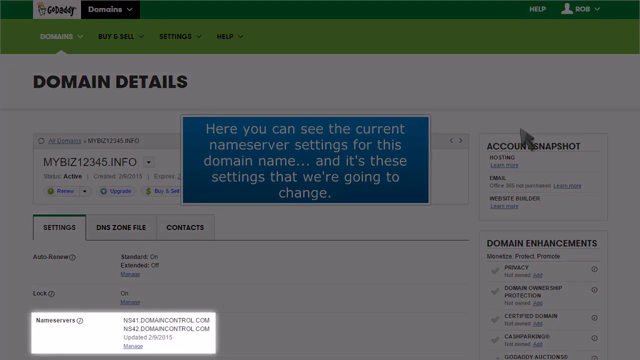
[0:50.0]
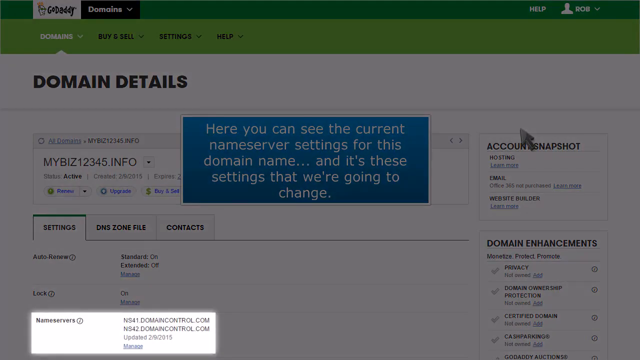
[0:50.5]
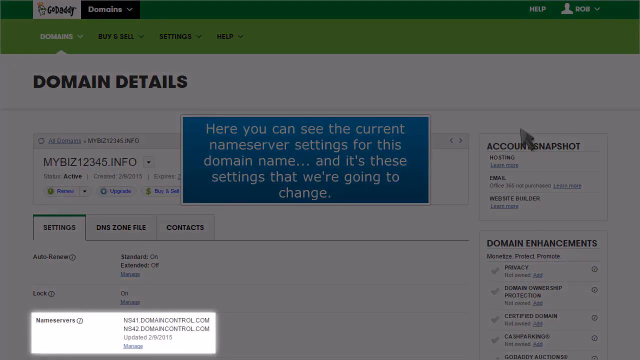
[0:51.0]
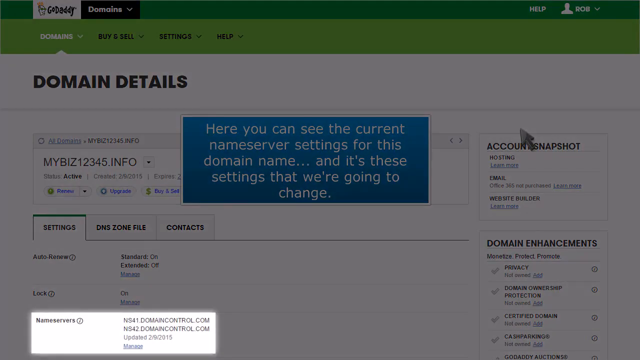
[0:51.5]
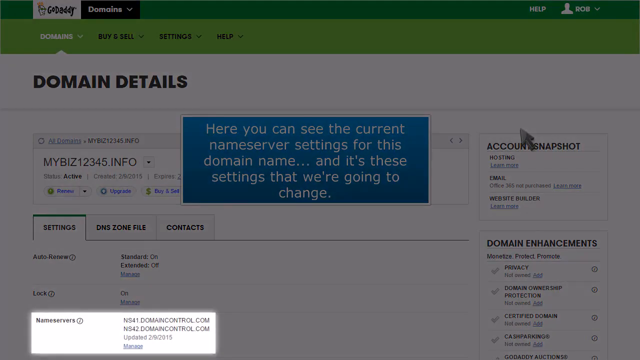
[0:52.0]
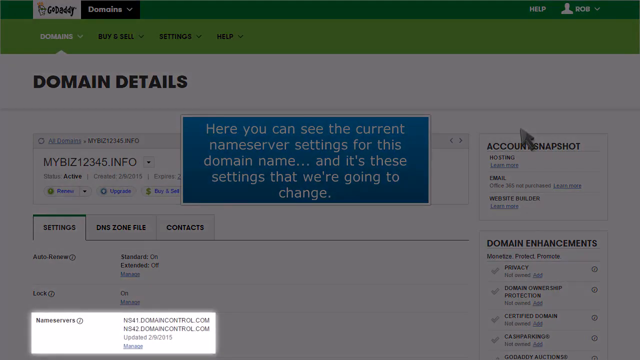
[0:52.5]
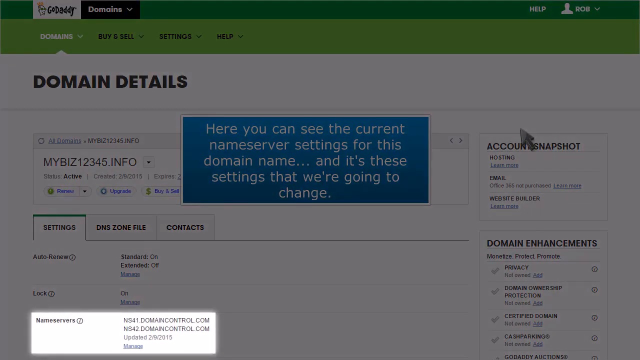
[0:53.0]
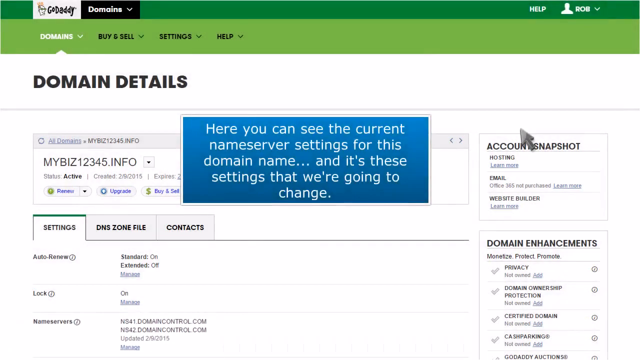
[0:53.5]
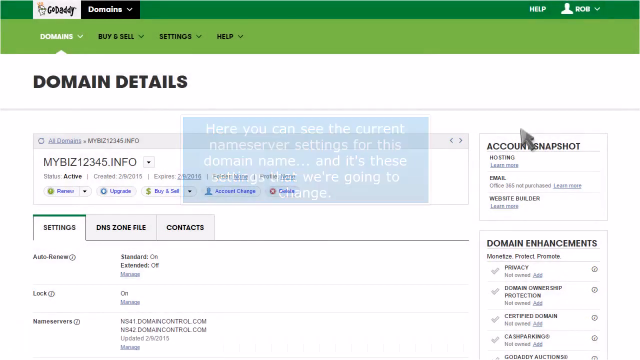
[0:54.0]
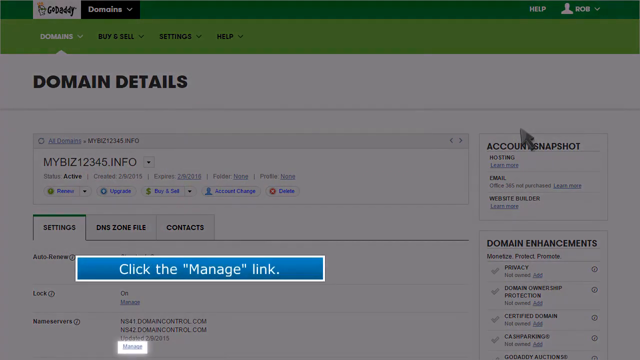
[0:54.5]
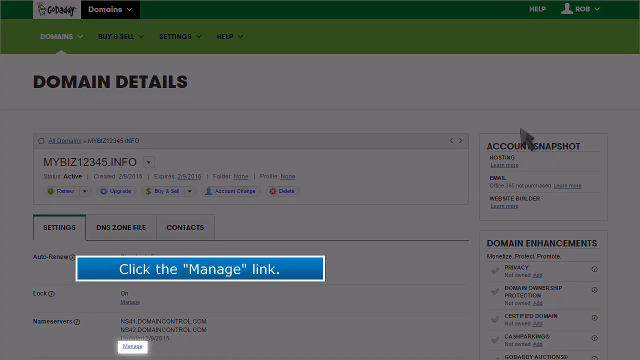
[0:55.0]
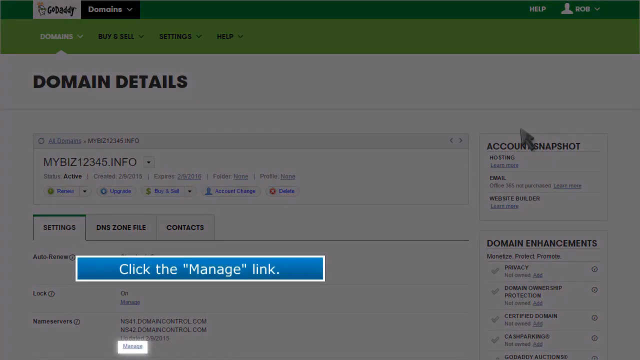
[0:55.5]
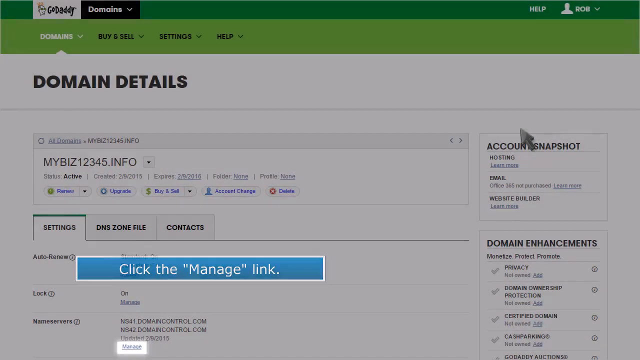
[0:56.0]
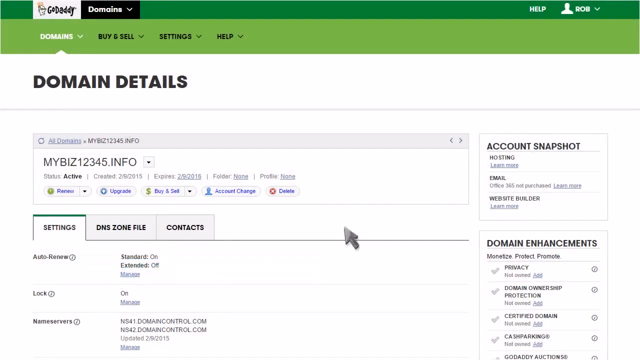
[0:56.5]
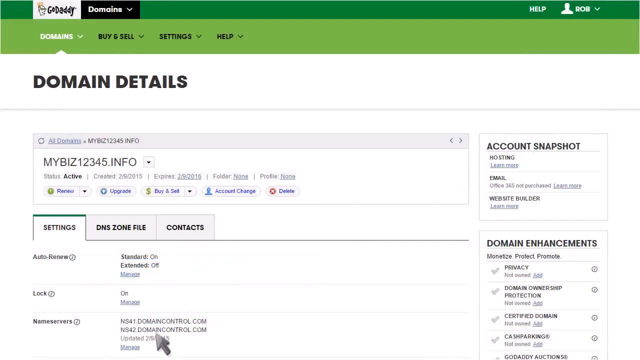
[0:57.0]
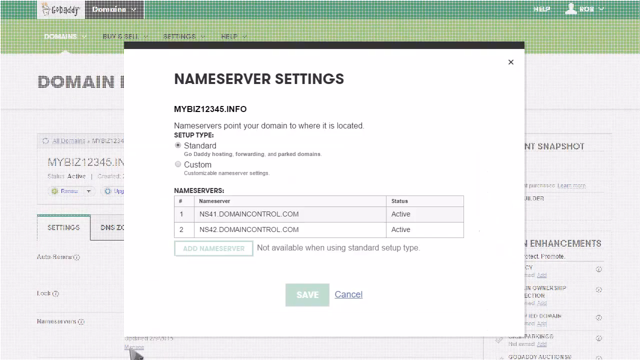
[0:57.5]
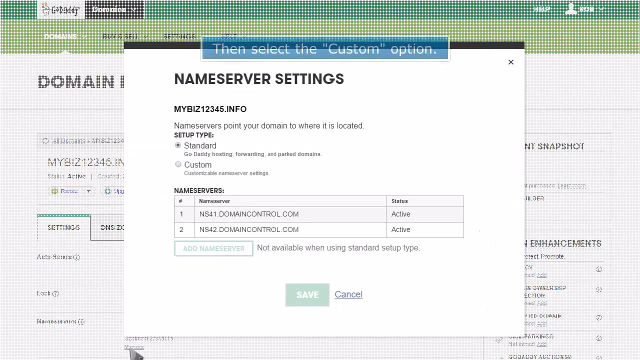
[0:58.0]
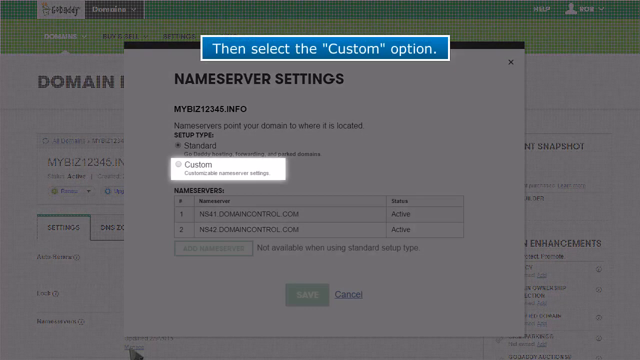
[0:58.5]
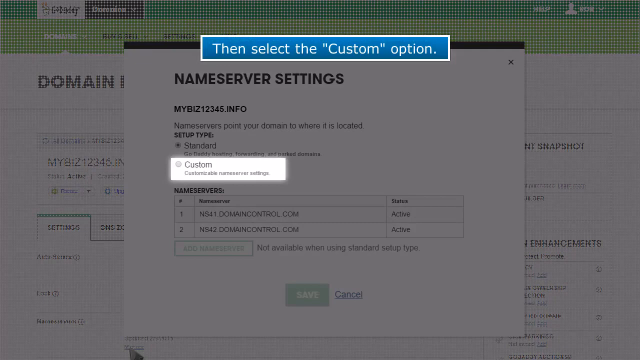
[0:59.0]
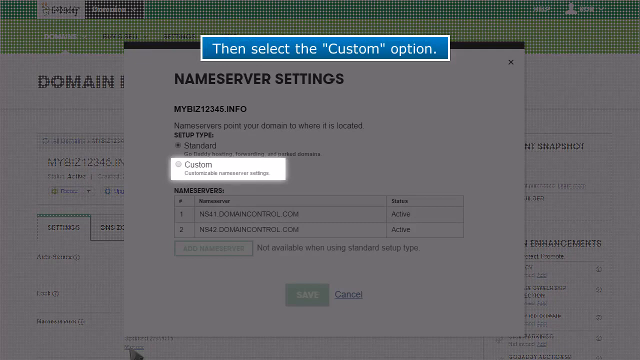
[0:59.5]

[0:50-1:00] For the domain being managed, the custom option is selected in order to customize its name servers.